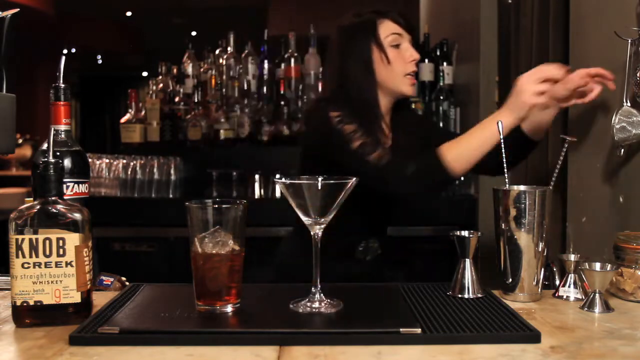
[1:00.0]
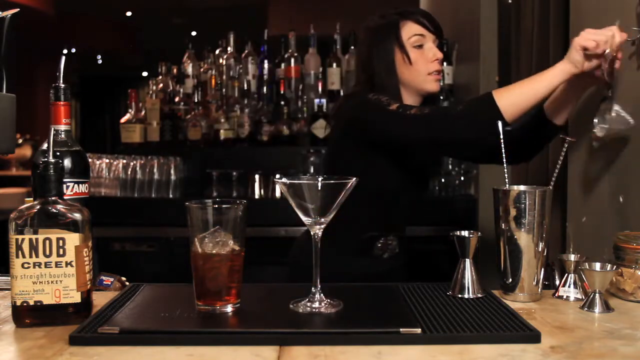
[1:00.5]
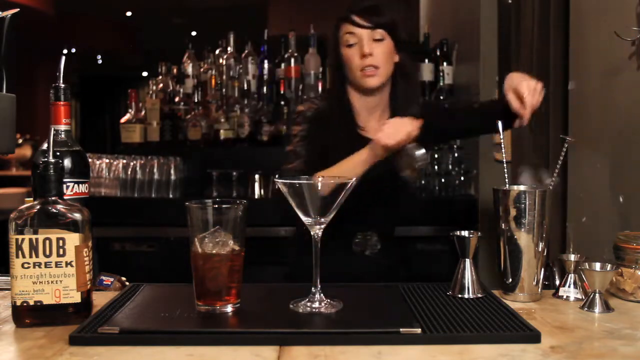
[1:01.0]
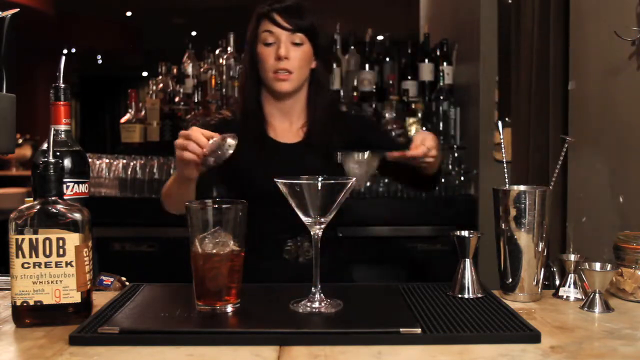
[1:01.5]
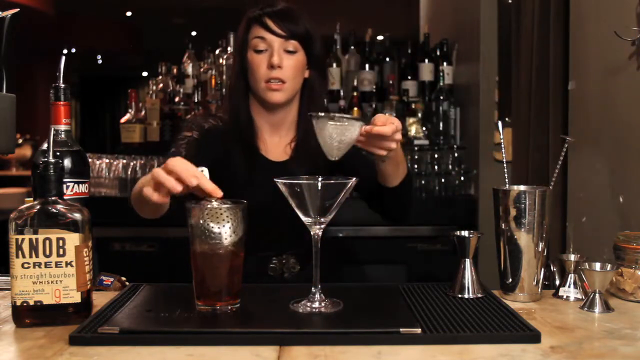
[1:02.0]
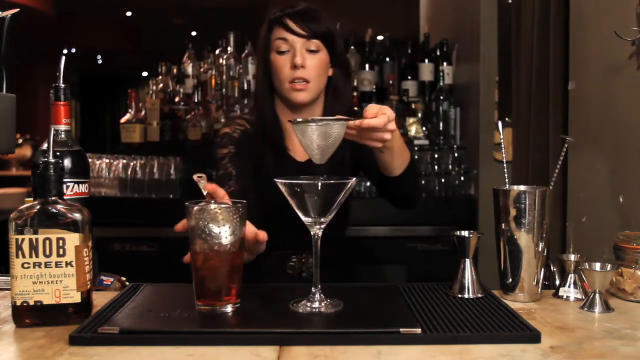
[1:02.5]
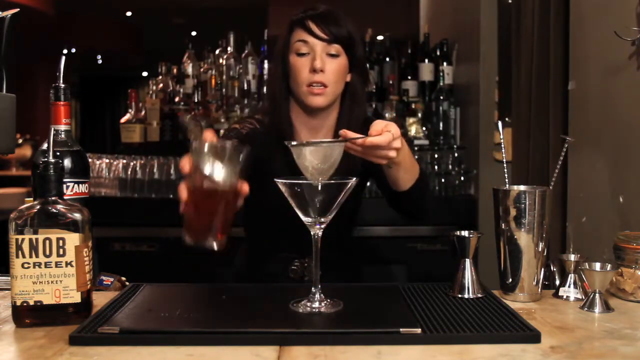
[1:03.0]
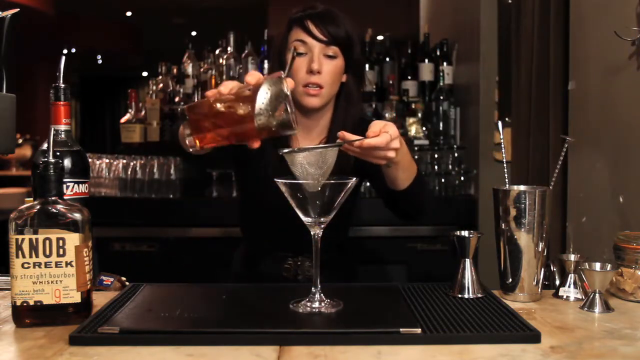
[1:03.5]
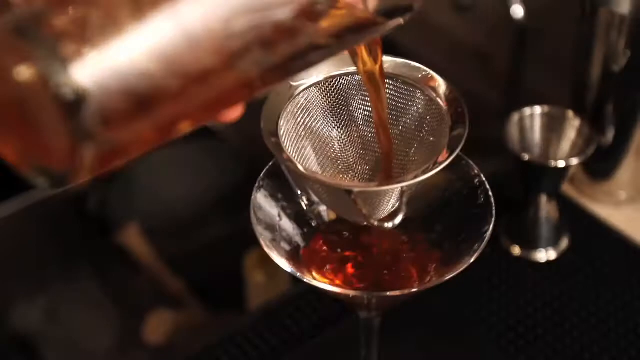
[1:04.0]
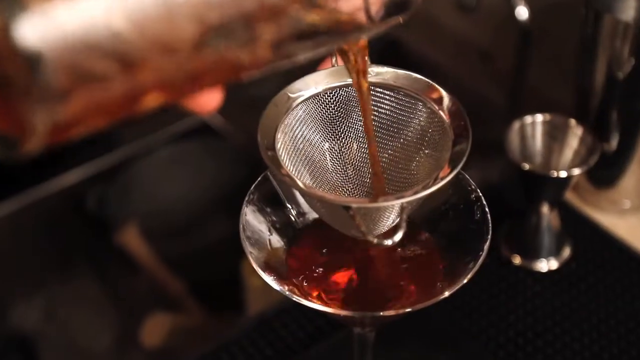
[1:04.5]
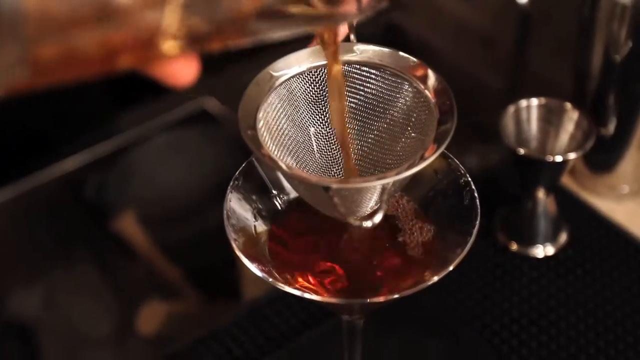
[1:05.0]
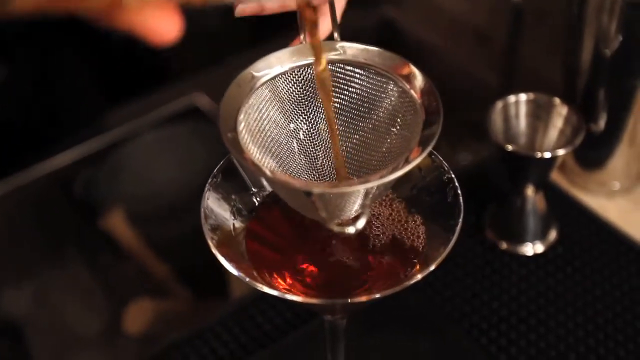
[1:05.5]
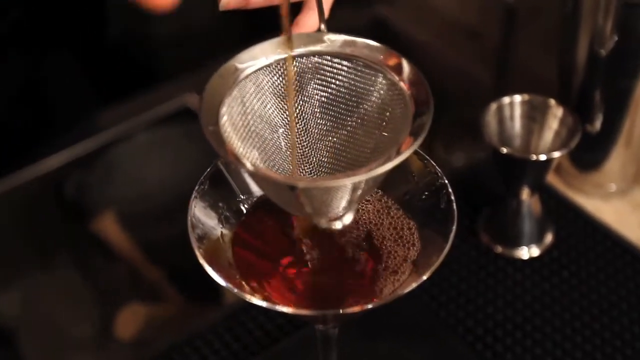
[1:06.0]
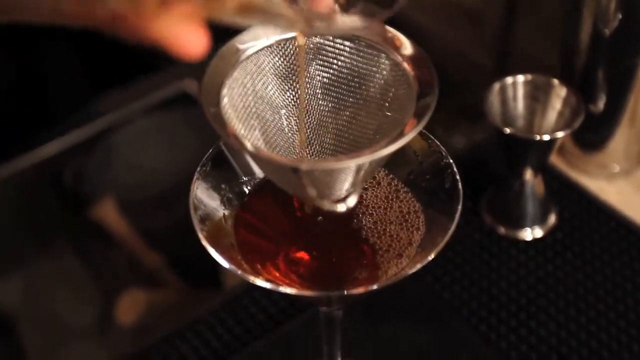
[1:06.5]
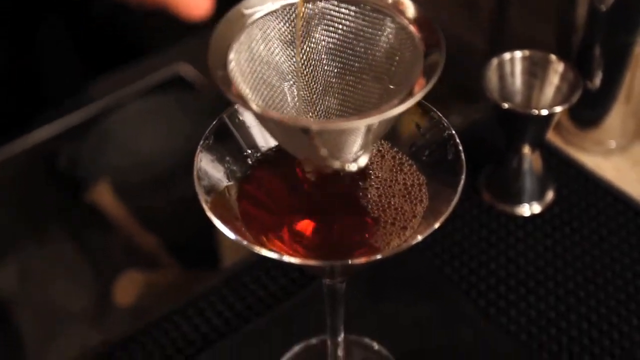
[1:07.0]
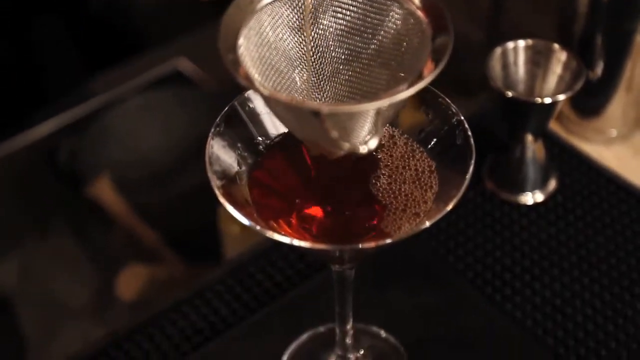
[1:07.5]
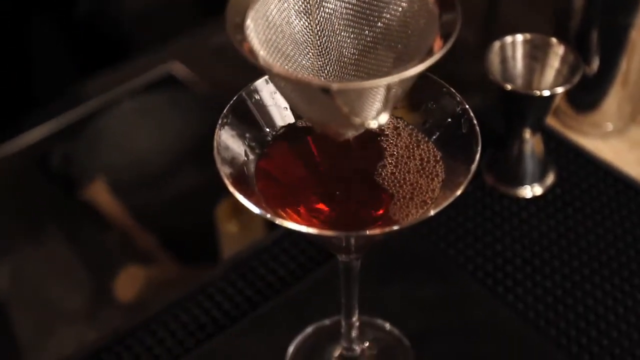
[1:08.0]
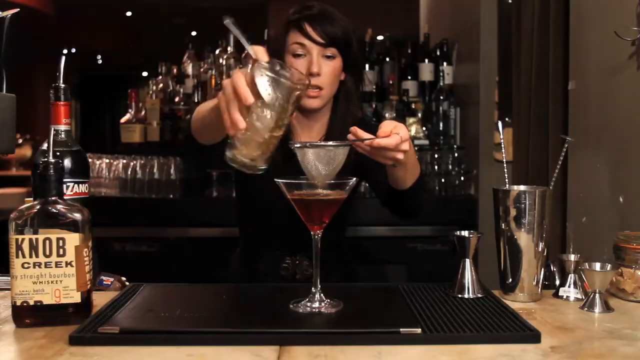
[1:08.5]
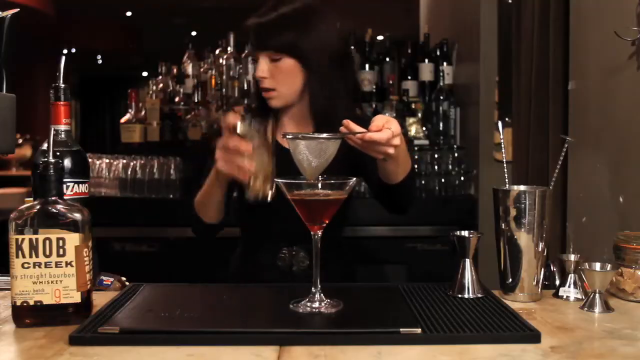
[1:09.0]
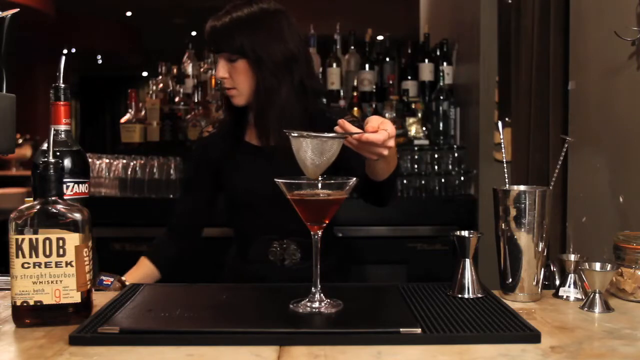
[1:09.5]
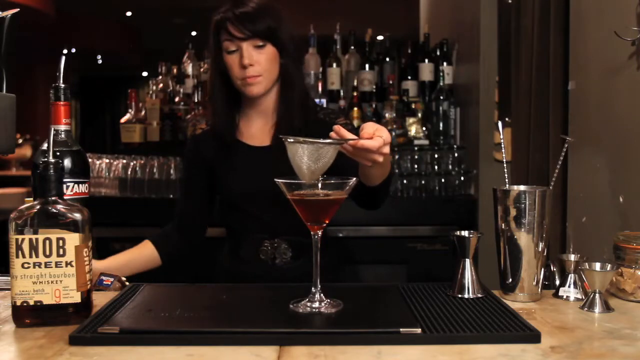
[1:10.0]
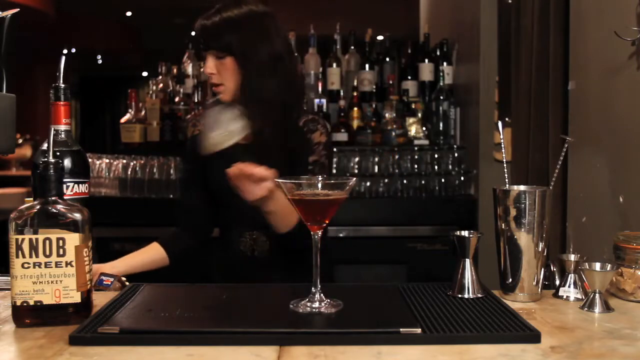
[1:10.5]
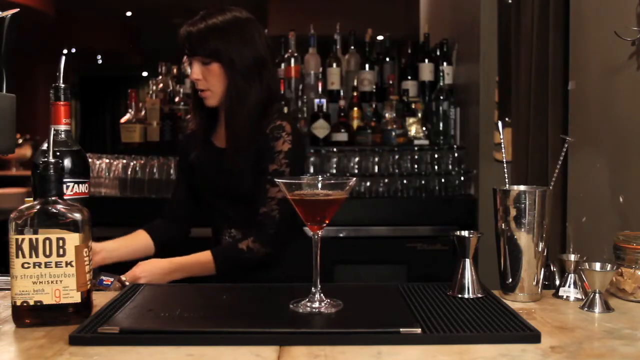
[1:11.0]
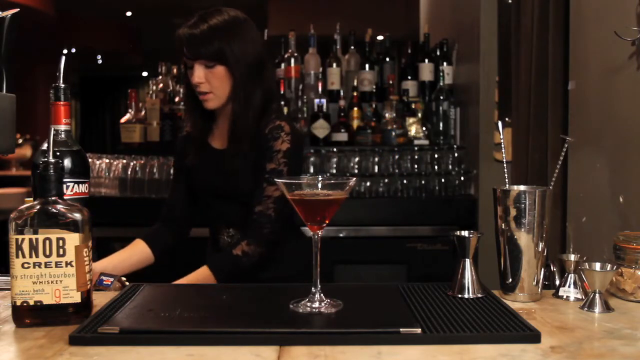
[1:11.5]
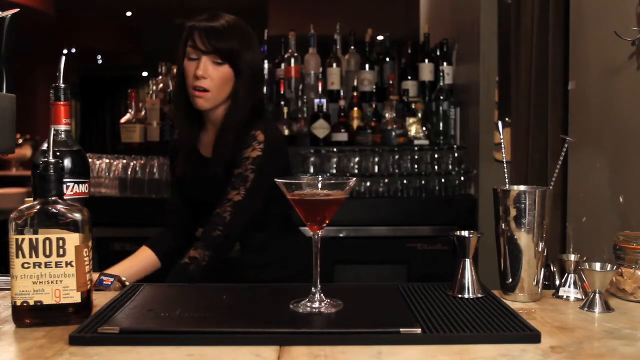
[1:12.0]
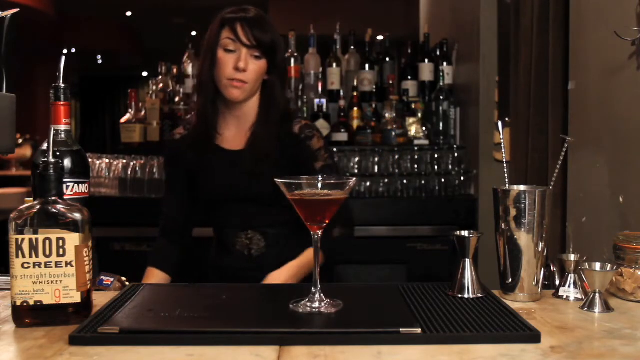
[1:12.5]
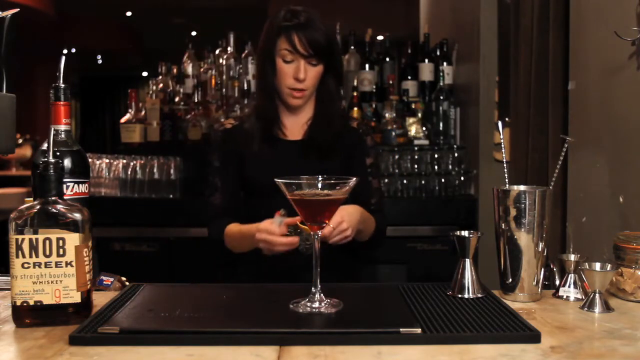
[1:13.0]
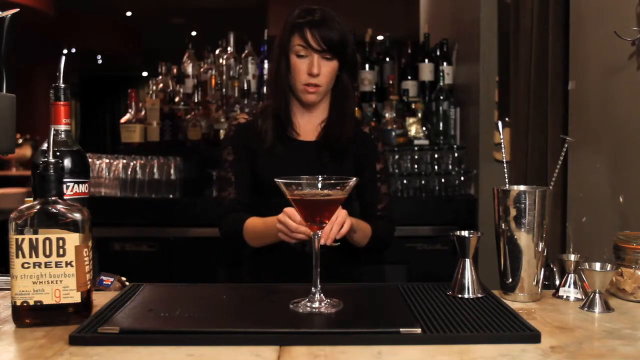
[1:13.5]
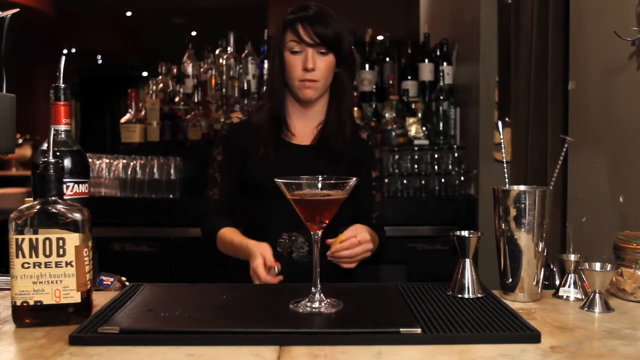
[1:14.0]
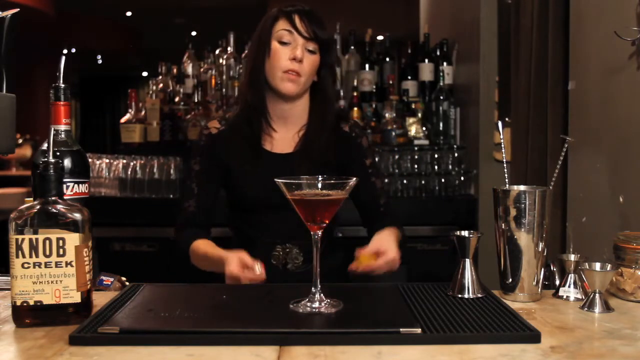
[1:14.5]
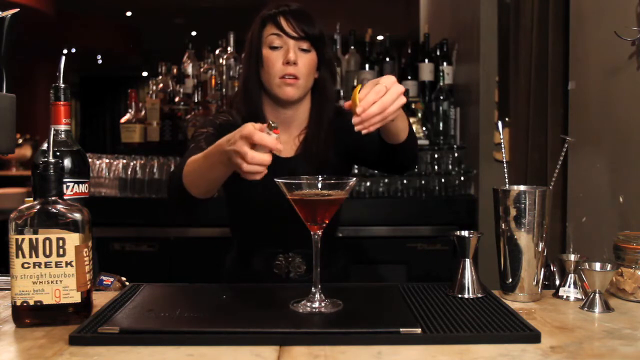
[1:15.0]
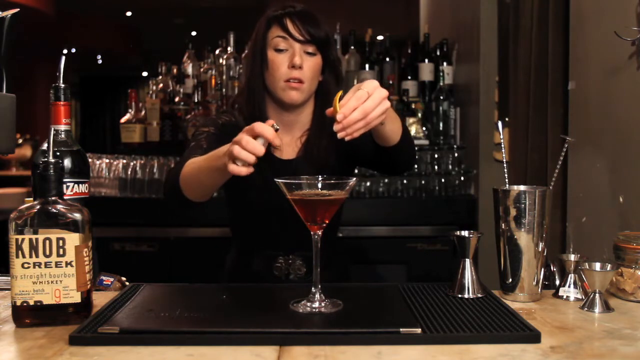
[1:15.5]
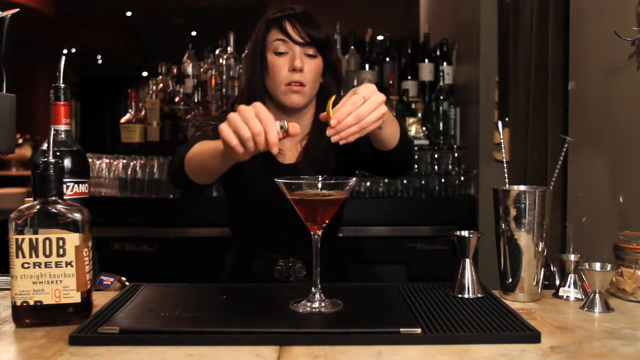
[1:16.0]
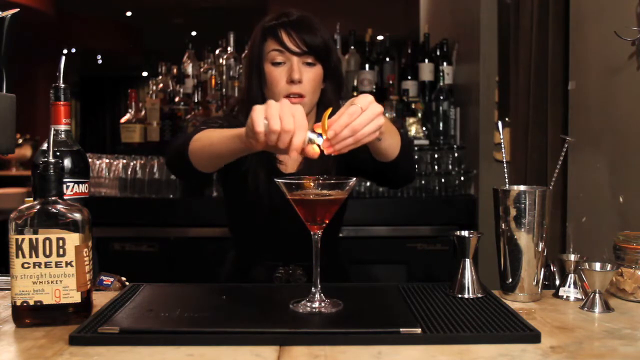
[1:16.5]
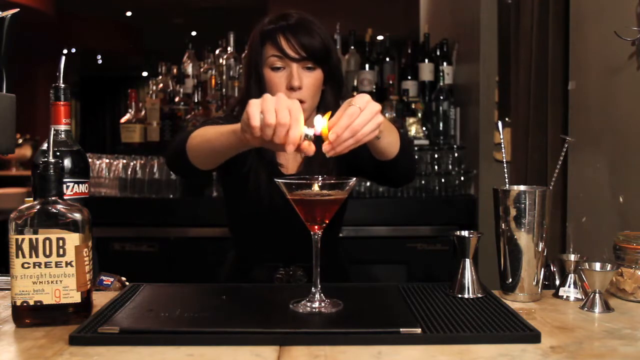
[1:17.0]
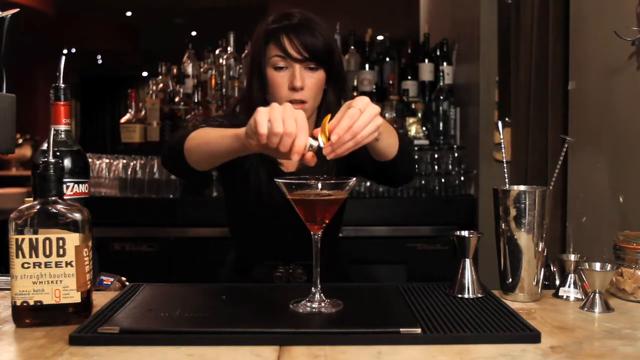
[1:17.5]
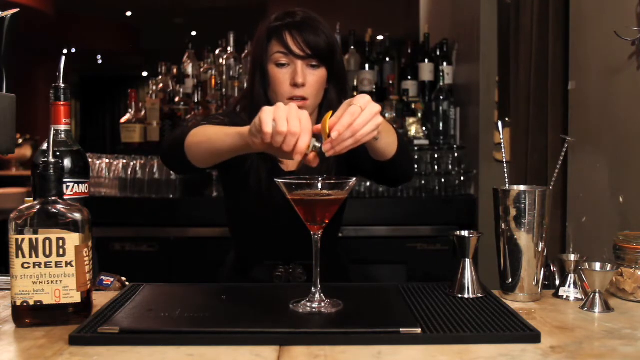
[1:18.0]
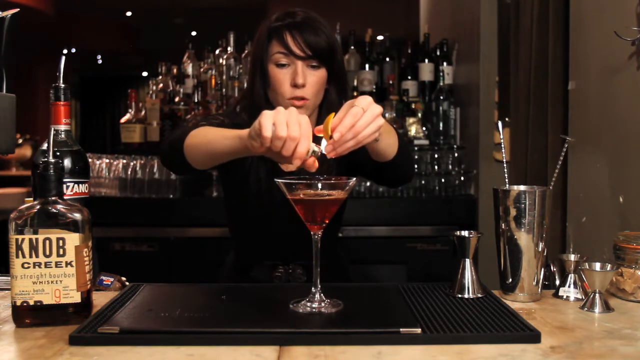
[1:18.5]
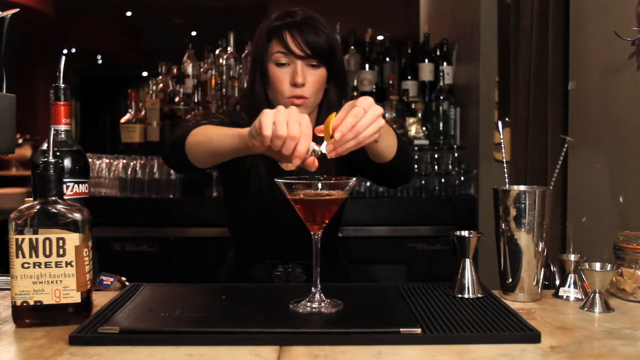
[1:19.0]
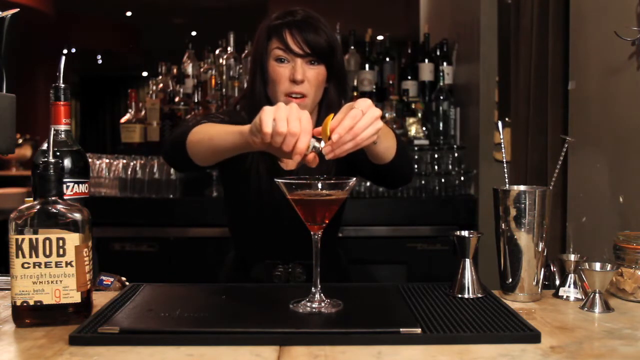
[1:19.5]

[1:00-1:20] The woman reaches for something off the wall on the right side of the screen, what looks like a little sifter. She puts one inside the glass and holds another over the martini glass, then pours the drink through the sifter on the glass and through the sifter above the martini glass into the martini glass. There is now a brown liquid in the martini glass. She puts the cup and the sifters down off-camera to the left side. She then takes what looks like a lighter in one hand and a piece of peel, maybe a lemon peel, in the other, and lights the peel a bit with the lighter, burning the outside of it.